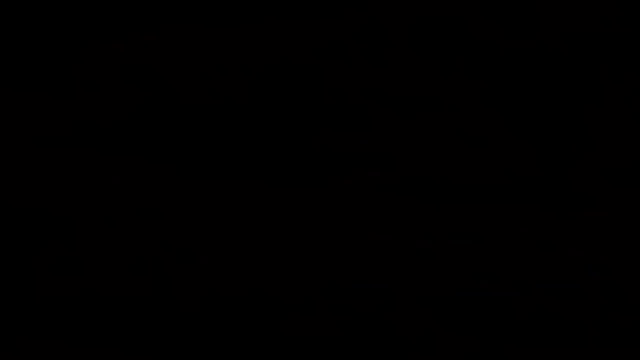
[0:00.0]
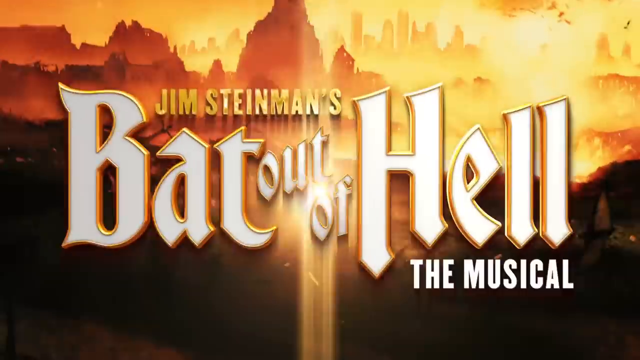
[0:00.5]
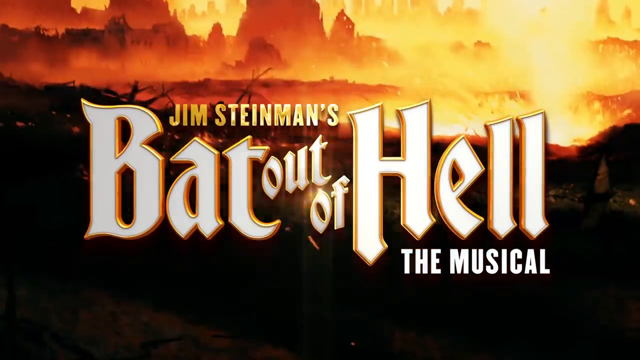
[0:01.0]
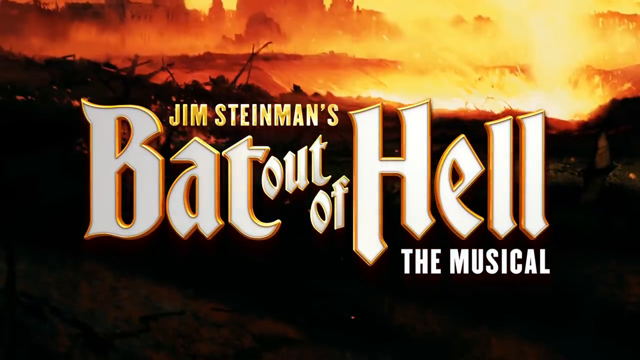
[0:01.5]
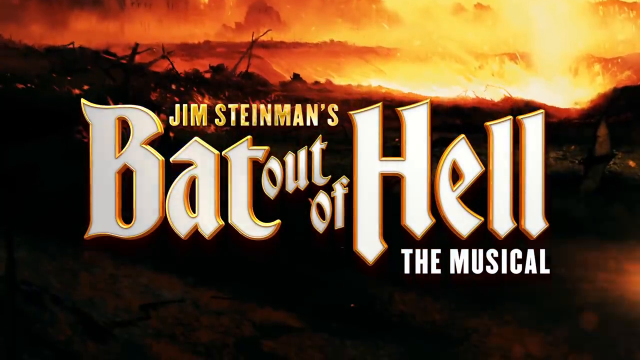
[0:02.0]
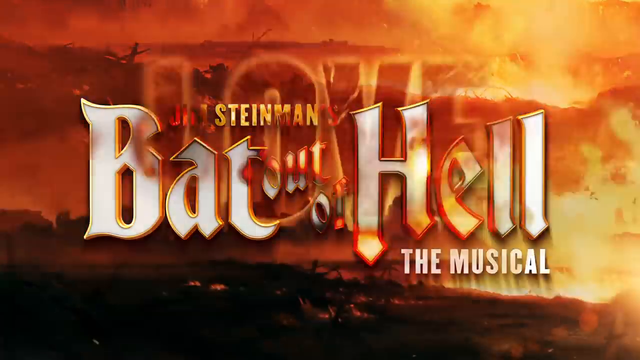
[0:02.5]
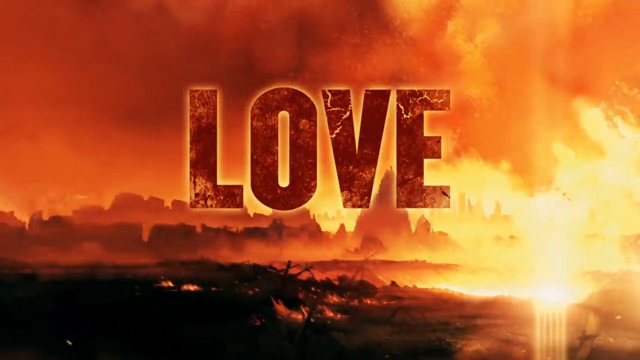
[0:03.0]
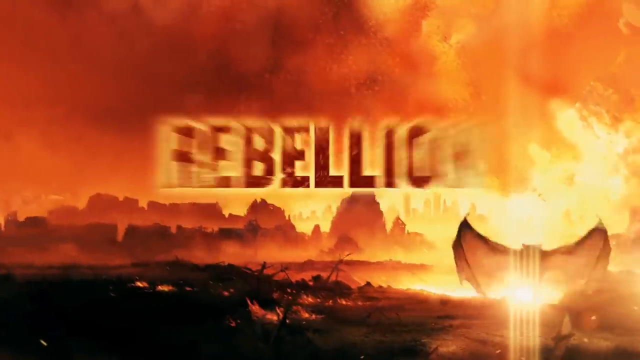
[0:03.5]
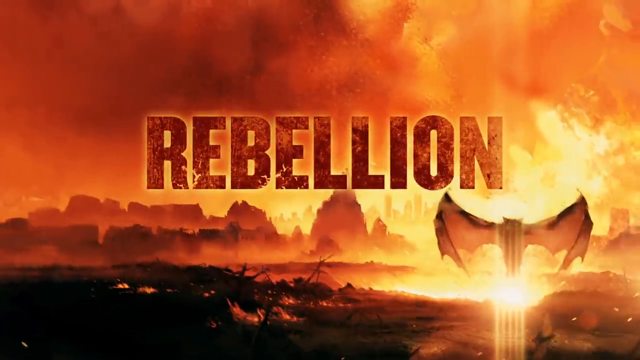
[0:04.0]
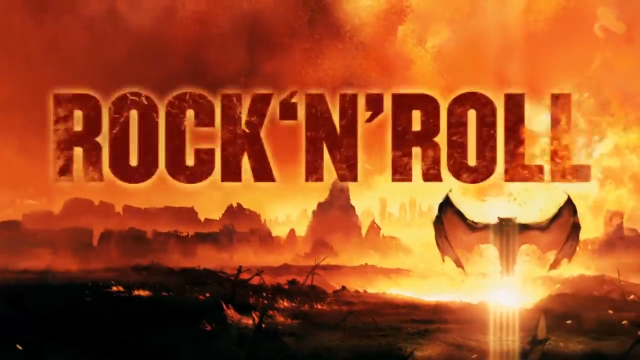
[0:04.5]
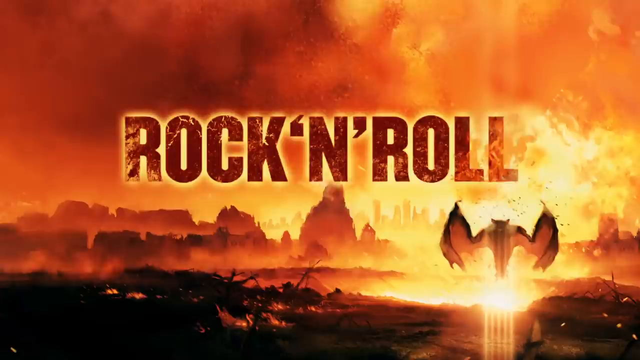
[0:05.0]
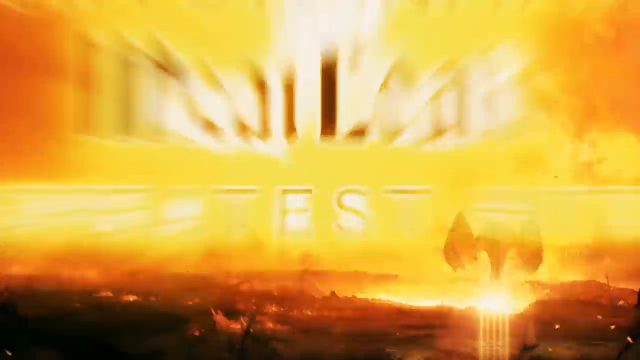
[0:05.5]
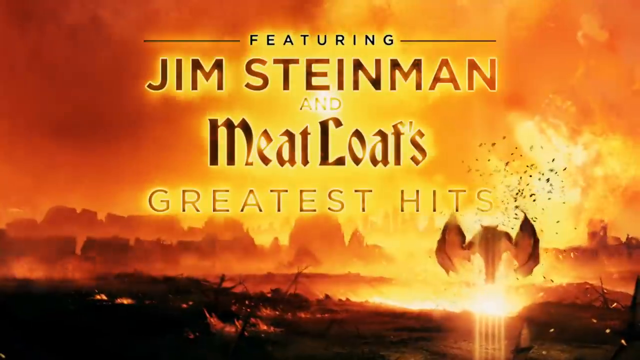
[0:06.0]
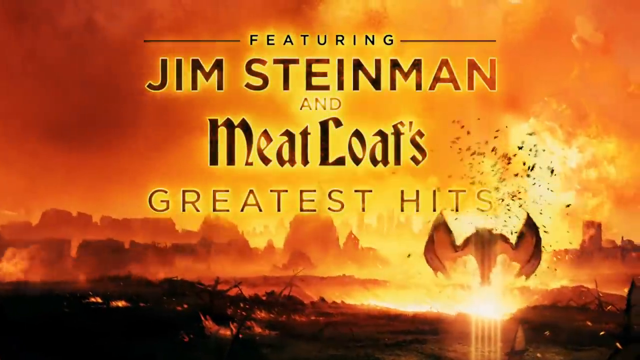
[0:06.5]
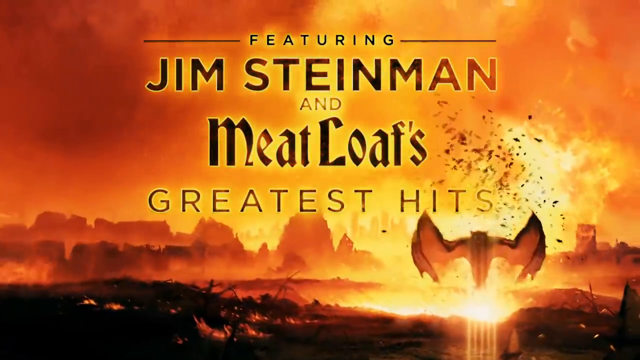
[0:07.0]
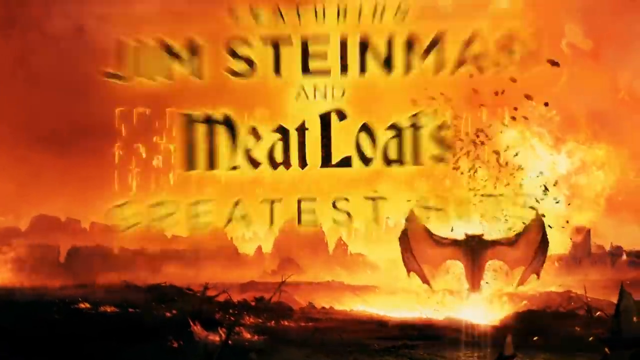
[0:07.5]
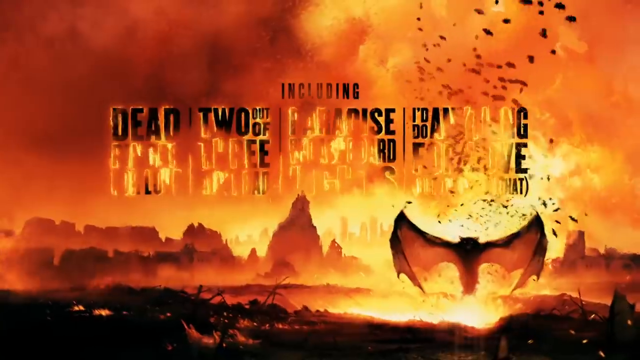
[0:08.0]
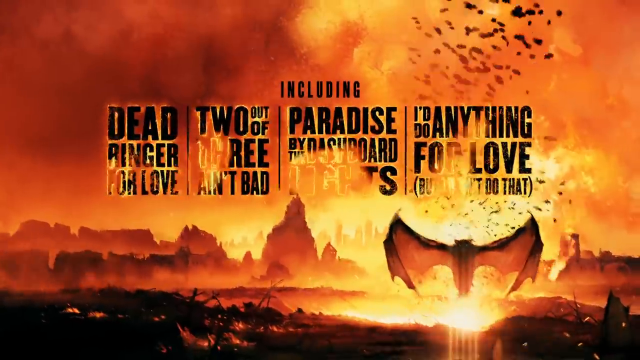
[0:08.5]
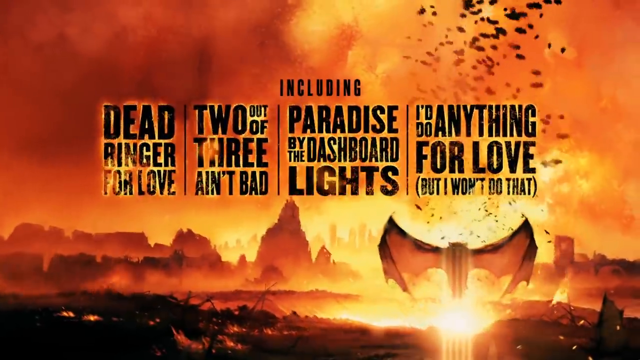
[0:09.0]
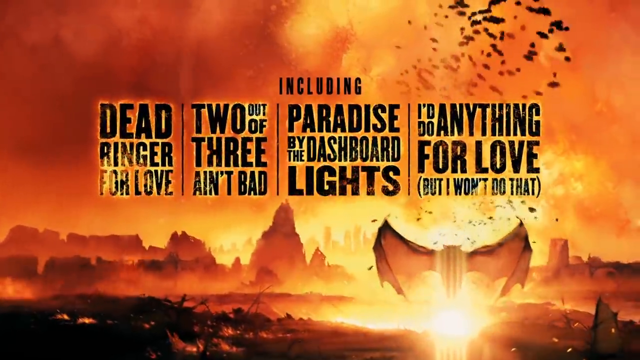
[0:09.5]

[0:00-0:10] A warm-looking image of scenery appears, with a silhouette in the foreground and yellows and oranges making up the distant scenery. A large title pops up reading "Bat out of Hell", indicating that it is Jim Steinman's musical; the letters are white with a gold surround. It fades to the word "love" in warm tones that fade into the background and look textured and cracked. The next word, in the same font, colour and effect, is "rebellion", and a bat appears in the bottom right corner. Then come the words "rock 'n' roll". Lastly, words pop up reading "Featuring Jim Steinman and Meatloaf's greatest hits", this time in darker writing that seems to glow yellow against the background, as more smaller bats swarm from behind the larger bat that is still in the foreground. The bats fly up and off the top of the screen.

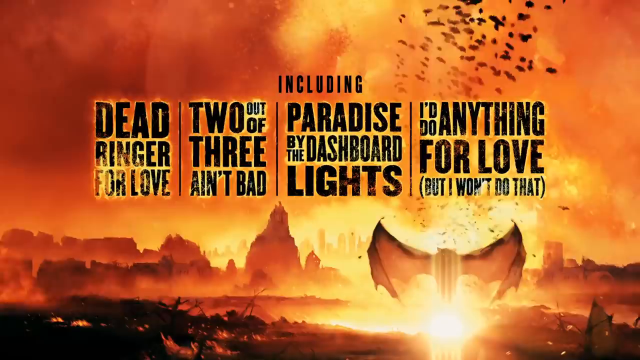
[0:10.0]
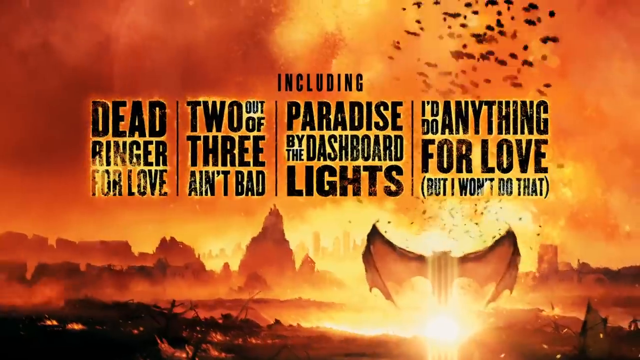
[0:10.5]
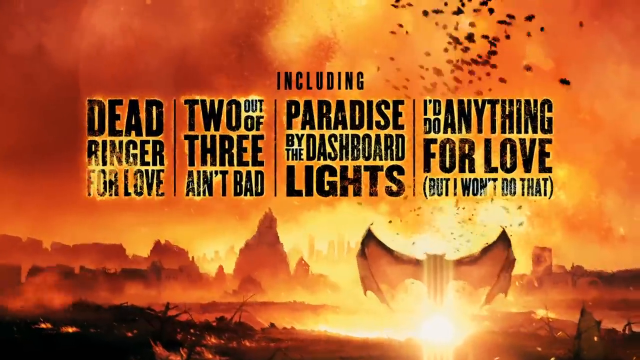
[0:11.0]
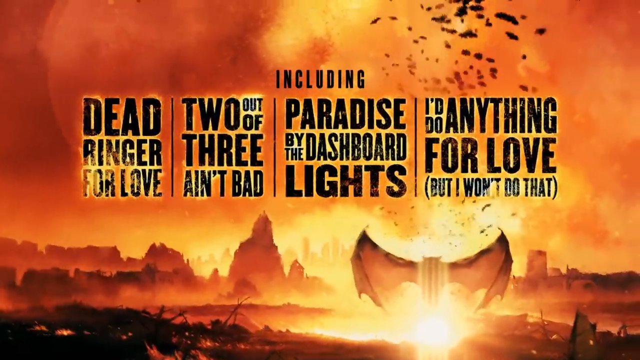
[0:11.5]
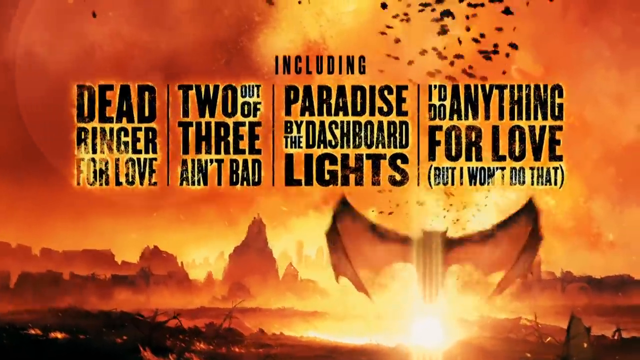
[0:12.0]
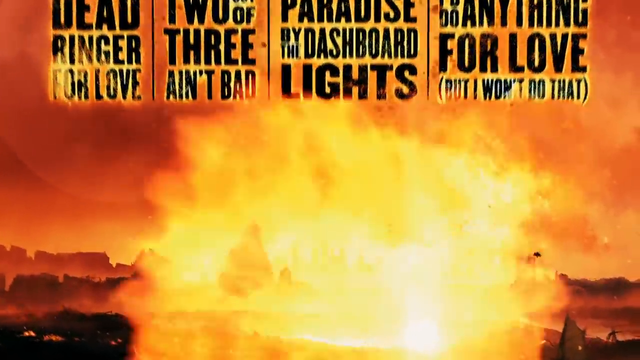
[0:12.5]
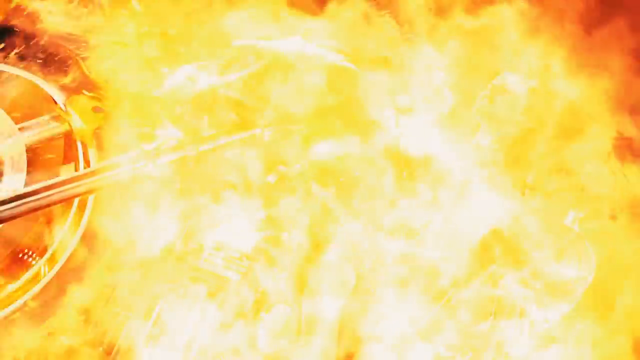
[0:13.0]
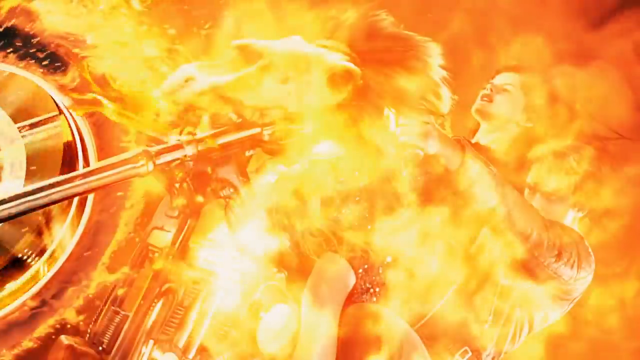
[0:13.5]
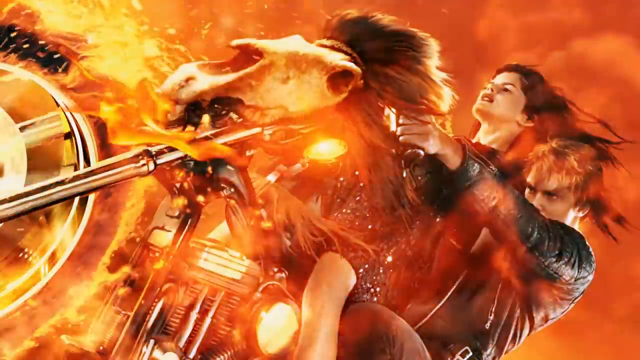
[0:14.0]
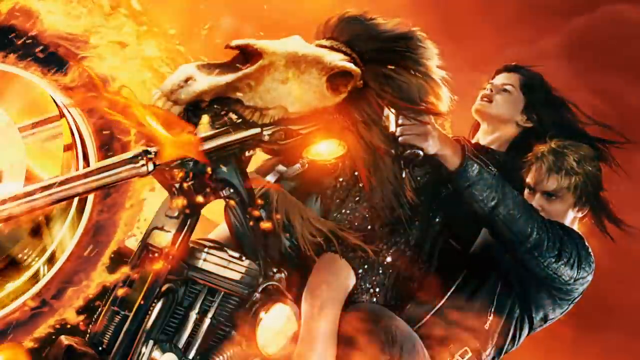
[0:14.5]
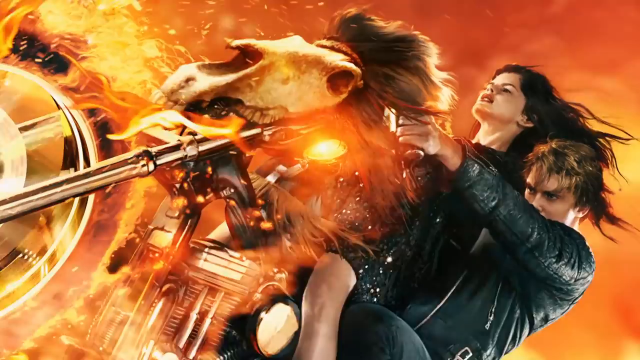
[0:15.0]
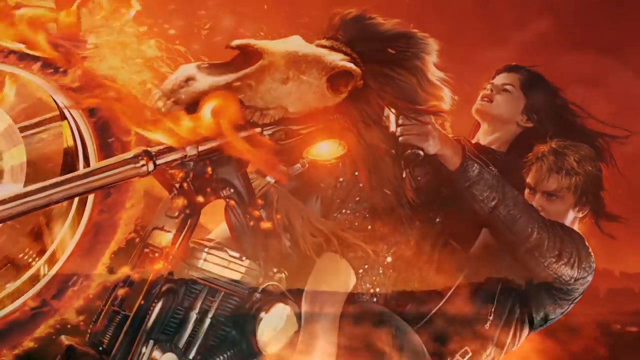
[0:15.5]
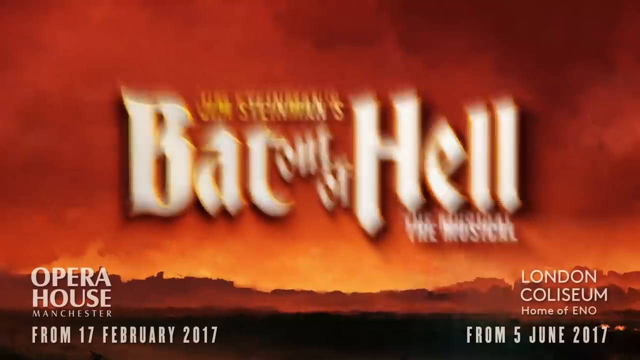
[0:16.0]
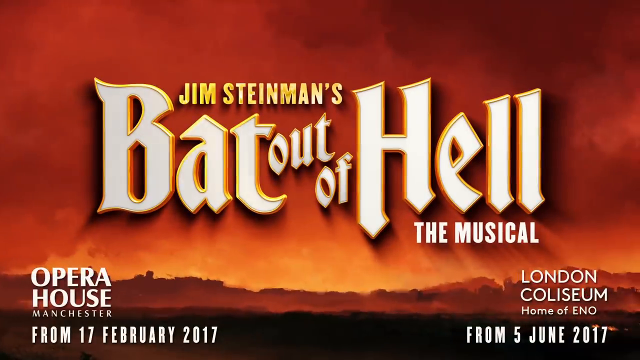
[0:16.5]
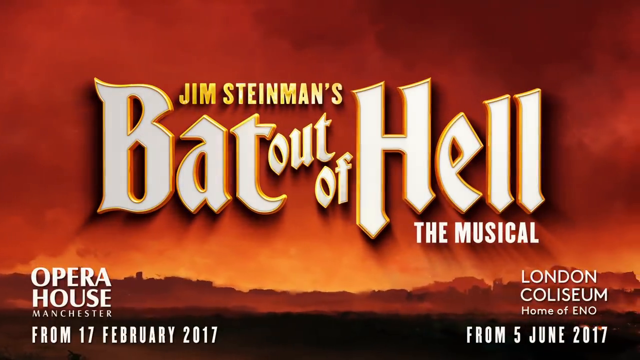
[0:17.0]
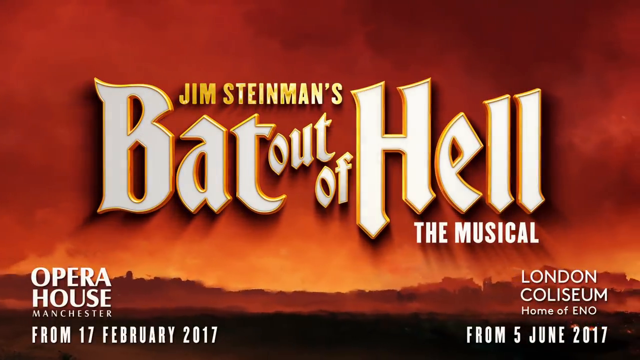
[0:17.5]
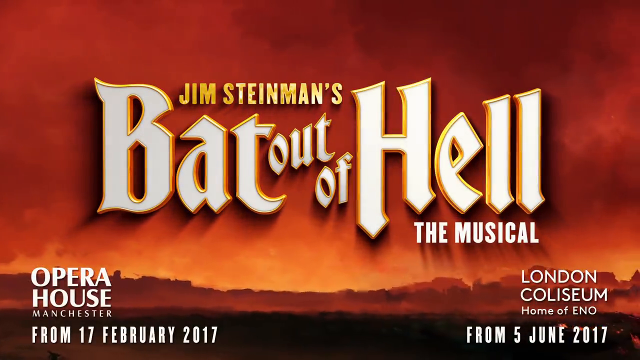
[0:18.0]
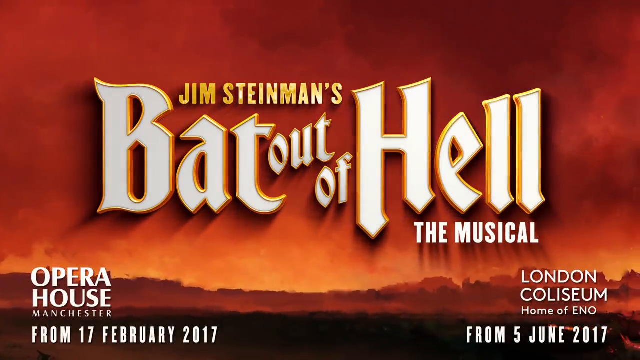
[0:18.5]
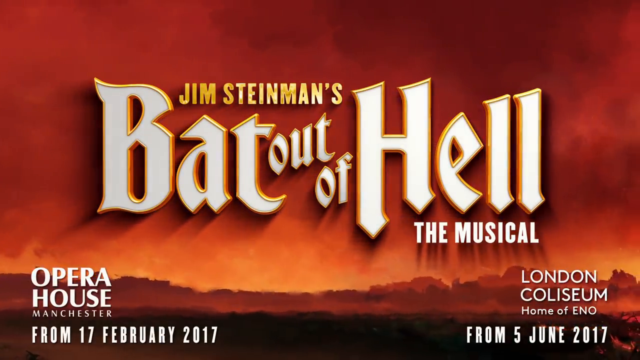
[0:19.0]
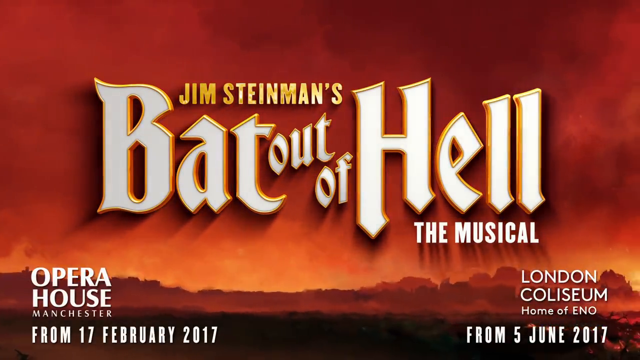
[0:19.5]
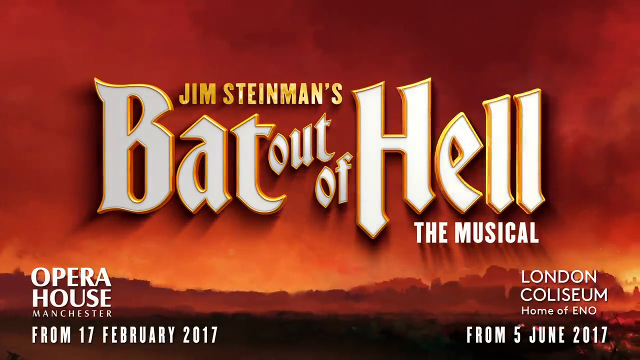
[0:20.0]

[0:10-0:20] More text of the advertisement flicks up in the same dark font as the previous words, appearing to have a yellow glow behind it. It lists songs featured in the musical, including "Deadringer For Love", "Two Out Of Three Ain't Bad", "Paradise By The Dashboard Lights" and "I'd Do Anything For Love (but I won't do that)". The bats are still swirling upwards in the background, and the writing rises up and off the screen. A fire seems to build up on the screen, and then an image appears of a man and a woman riding a motorbike, wearing leather and with quite strained expressions. Colours of fire surround them, and there looks to be some sort of animal skull adorning the front of the motorbike.